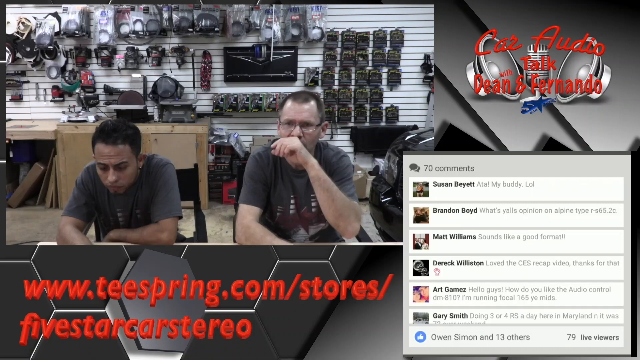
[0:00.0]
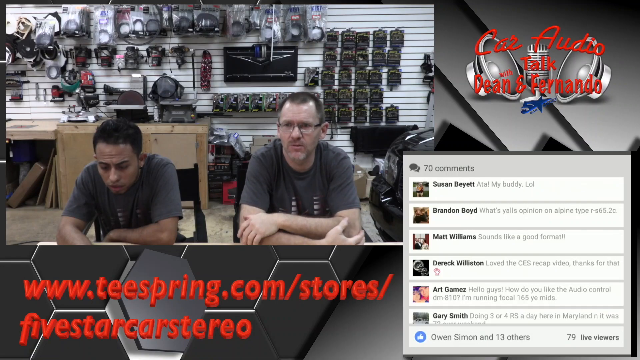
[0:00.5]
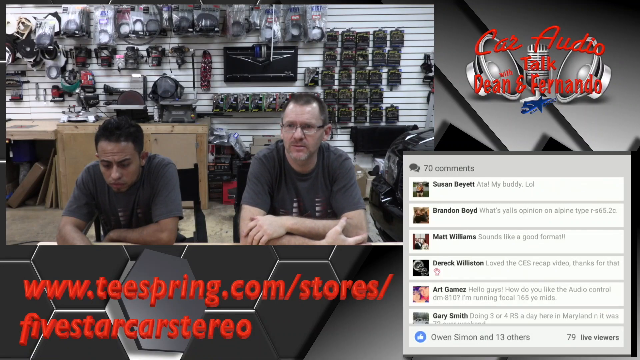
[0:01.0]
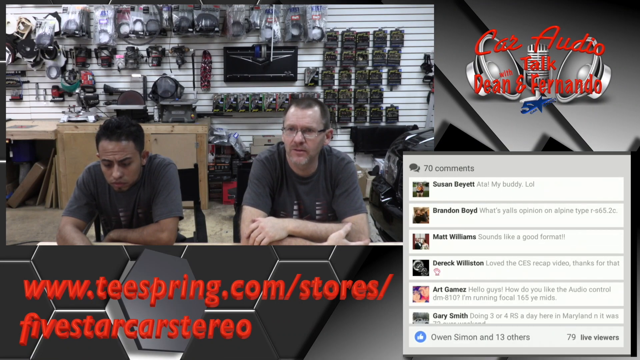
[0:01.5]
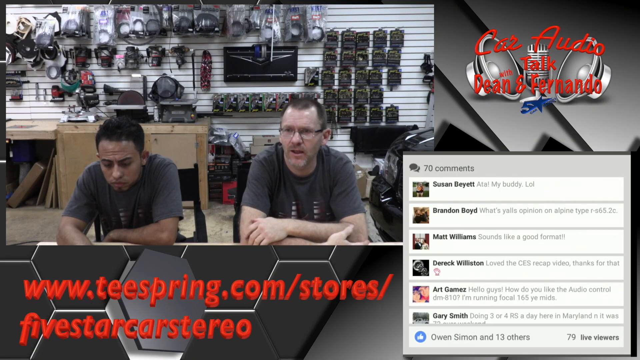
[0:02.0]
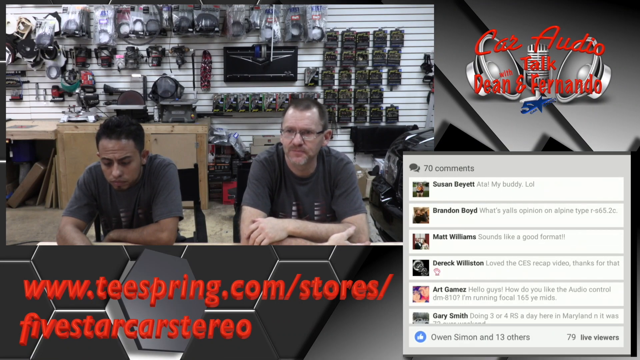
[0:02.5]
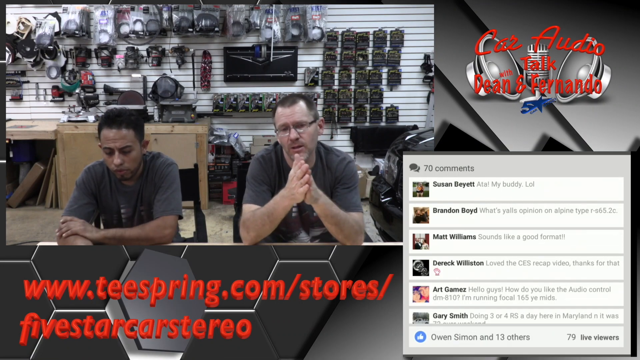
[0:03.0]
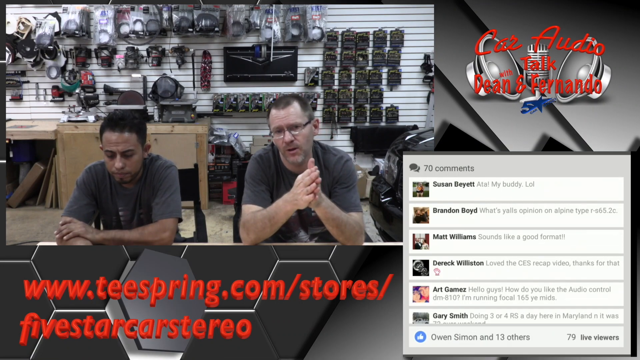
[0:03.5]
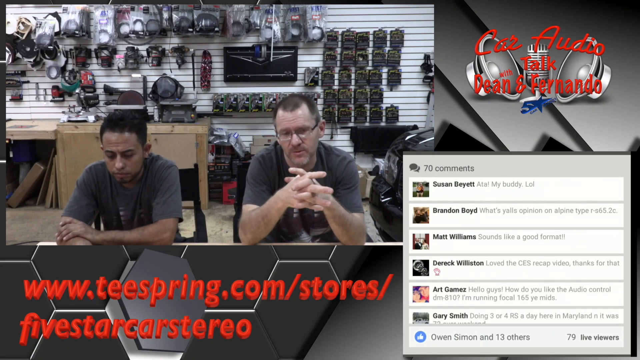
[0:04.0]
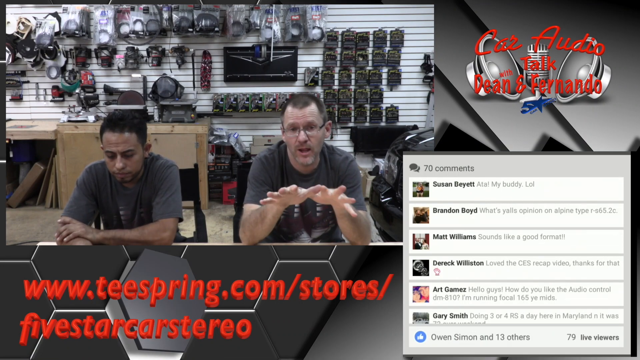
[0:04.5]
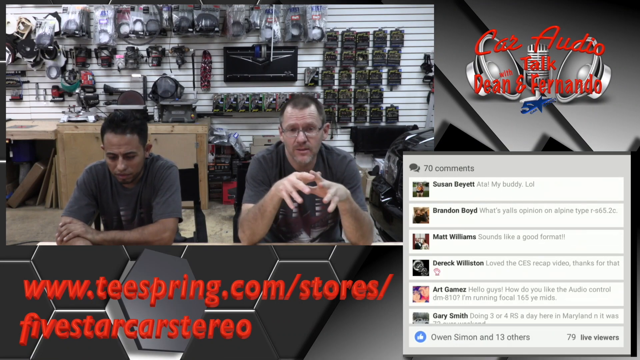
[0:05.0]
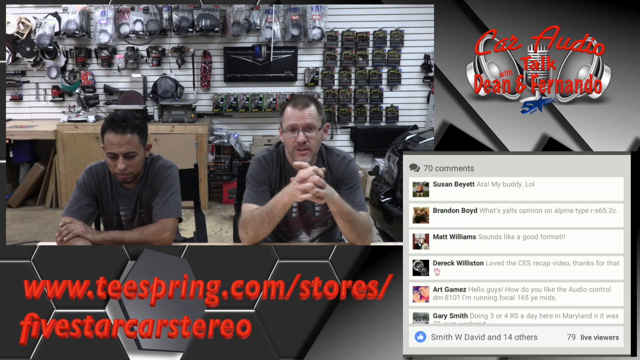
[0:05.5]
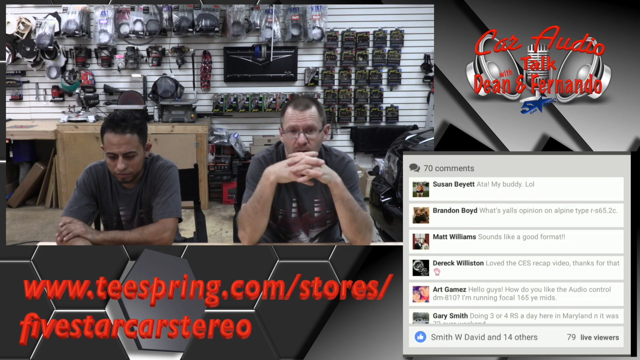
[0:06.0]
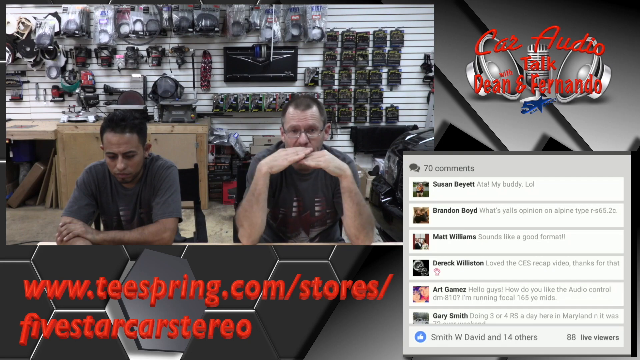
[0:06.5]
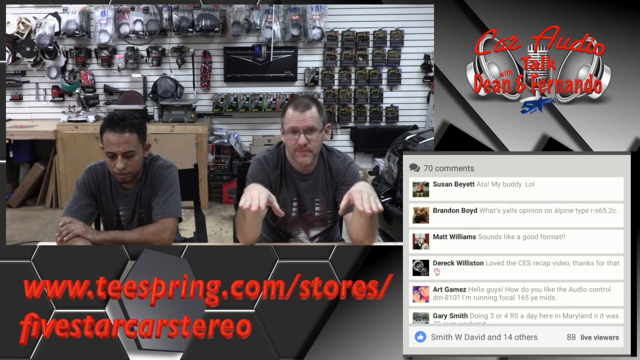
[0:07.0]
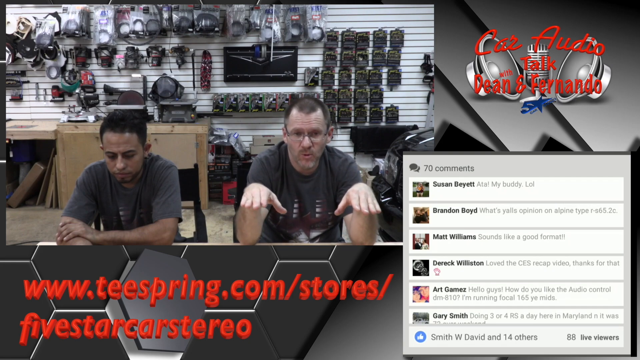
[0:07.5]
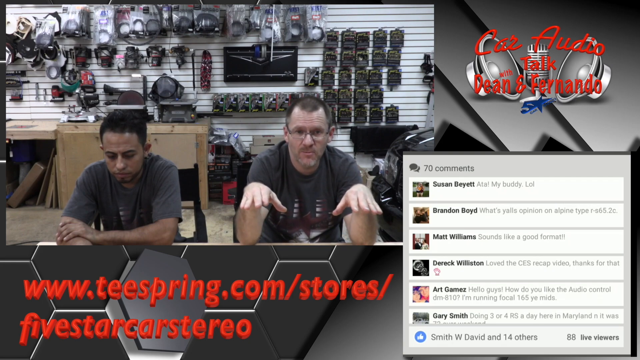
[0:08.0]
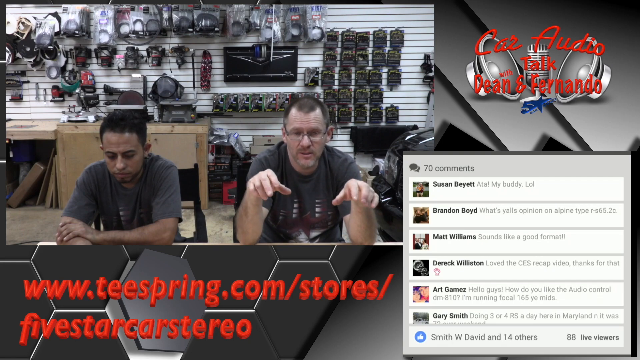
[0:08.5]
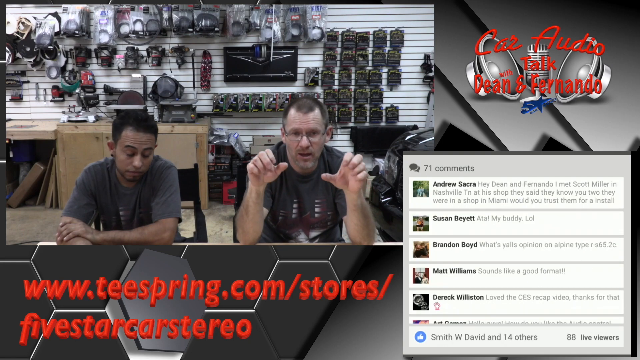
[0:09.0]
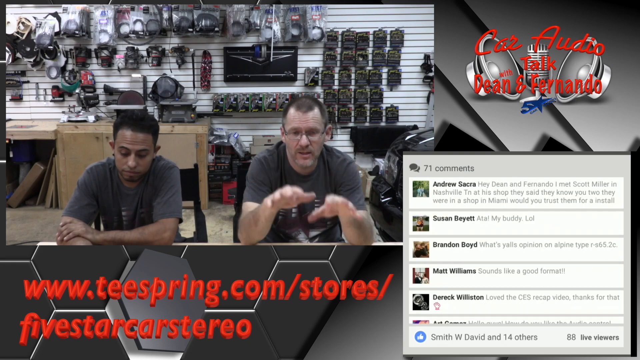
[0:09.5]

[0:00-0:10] Two men appear to be sitting down and facing the camera in a small rectangular screen at the top left of the frame. At the bottom left, red text reads "www.tspring.com/store/five star car stereo". At the bottom right is another rectangle that appears to show comments, currently 70, made of white rectangles with black text and grey comments. At the top right, red text reads "car audio talk with Dean and Fernando". The top-left feed seems to show the two men sitting down, facing the camera and wearing grey shirts. Behind them is a white wall with many goods and objects hanging off it, and the setting looks like a workshop. At the bottom left of the feed is what looks like a wooden workbench. The man on the left is Latino and the man on the right is white; both have short hair, and the white man wears glasses. The white man raises his left hand toward his mouth, then crosses both arms, holding his elbows, as he talks facing the camera. He then puts his palms together in front of his face with his elbows on the table and keeps talking, while the Latino man on the left rests his left forearm on the table and extends his right arm out, apparently looking at what seems to be a laptop or something similar. The white man puts his palms down and keeps talking, and the Latino man gives a small head nod.